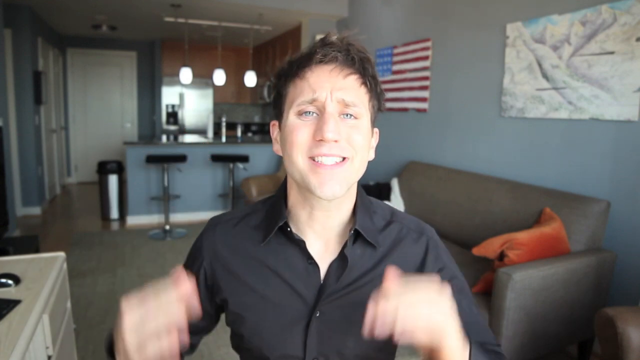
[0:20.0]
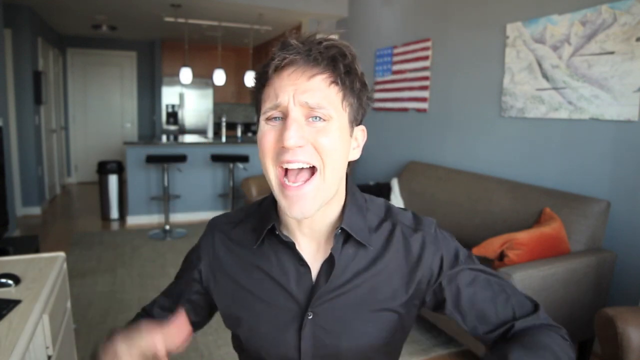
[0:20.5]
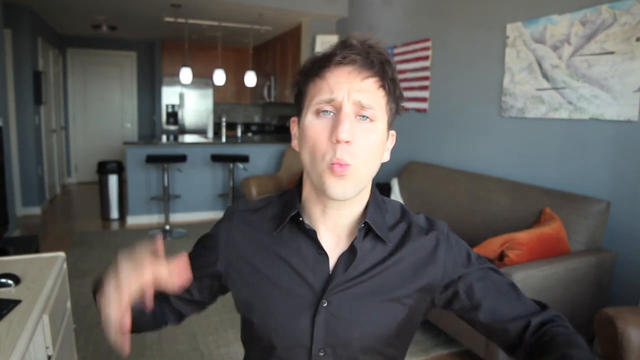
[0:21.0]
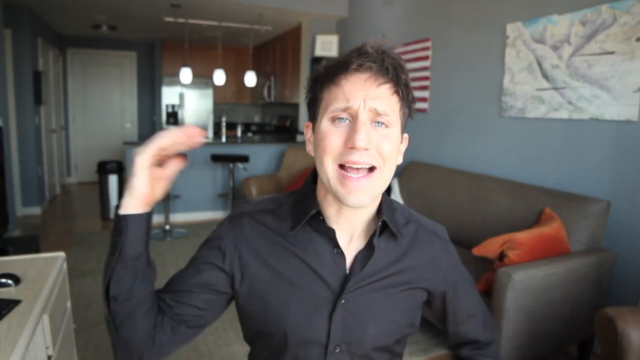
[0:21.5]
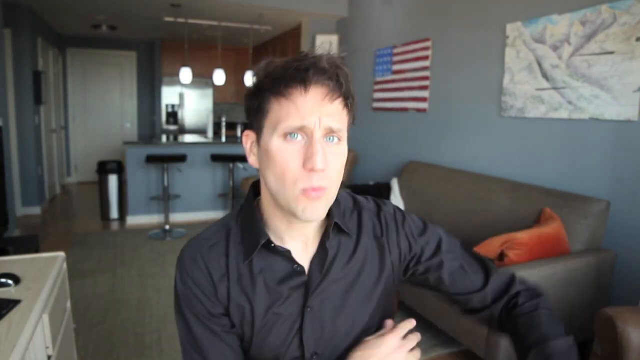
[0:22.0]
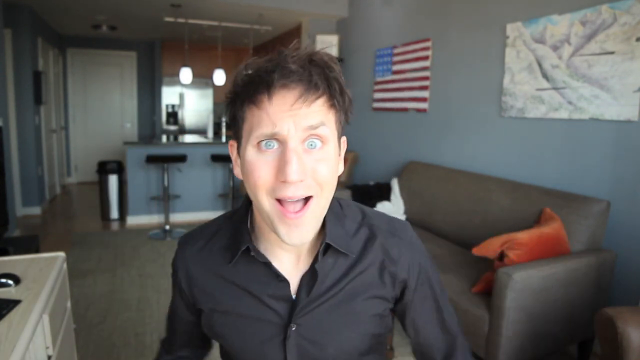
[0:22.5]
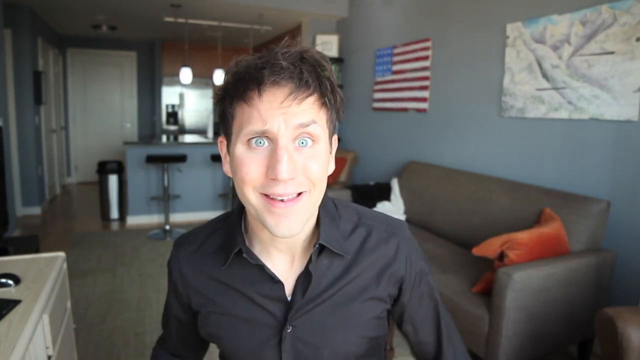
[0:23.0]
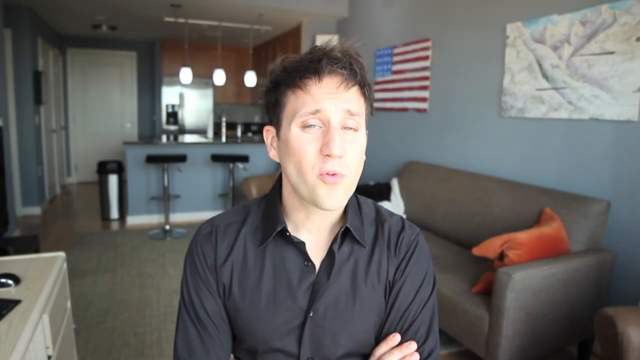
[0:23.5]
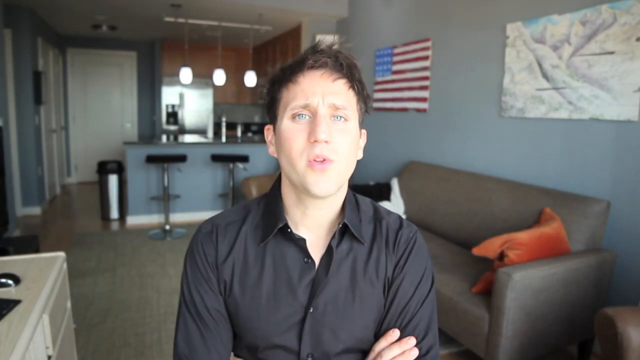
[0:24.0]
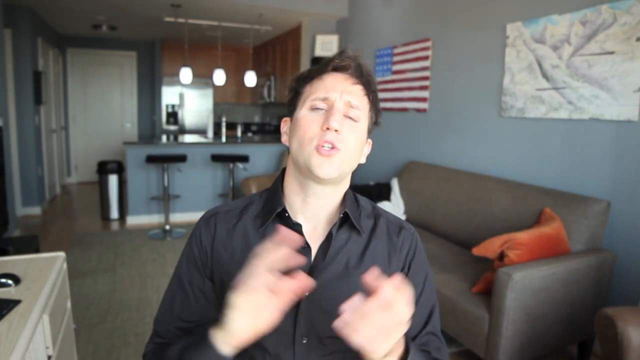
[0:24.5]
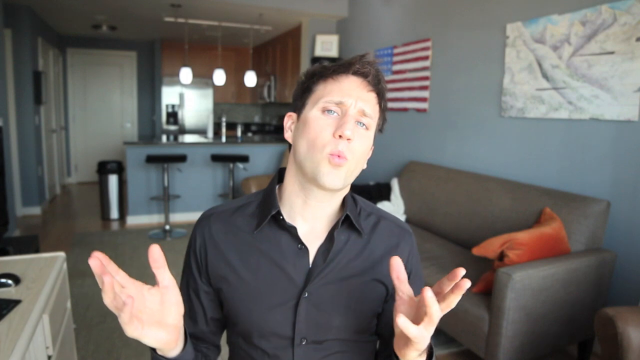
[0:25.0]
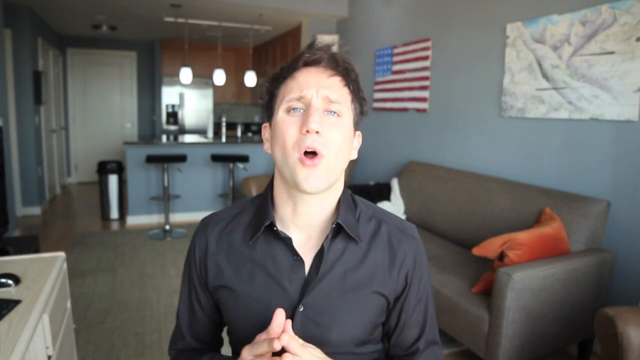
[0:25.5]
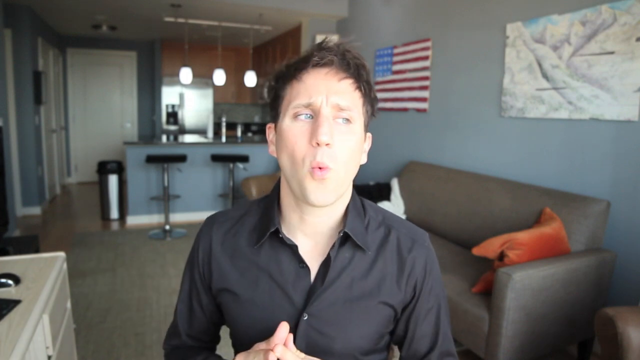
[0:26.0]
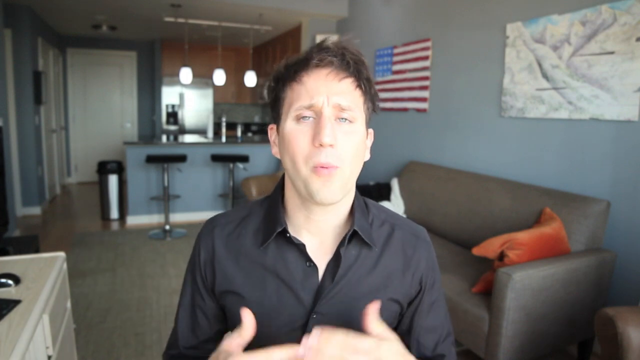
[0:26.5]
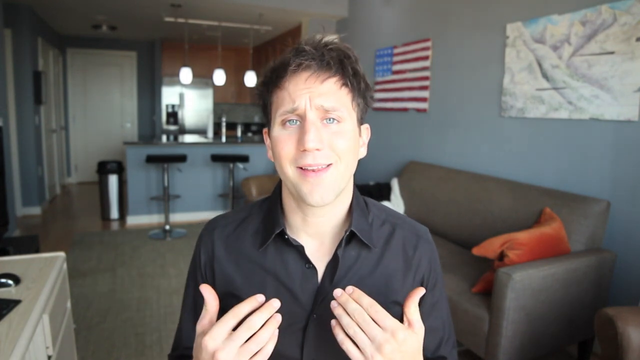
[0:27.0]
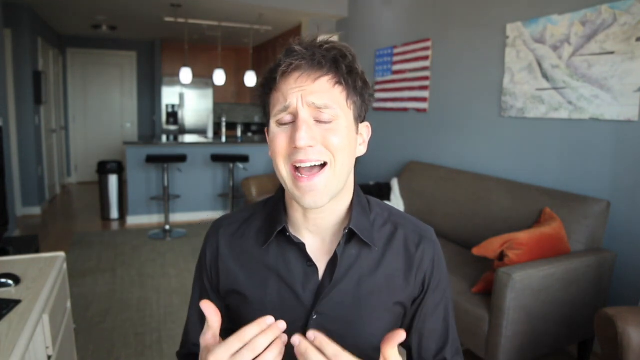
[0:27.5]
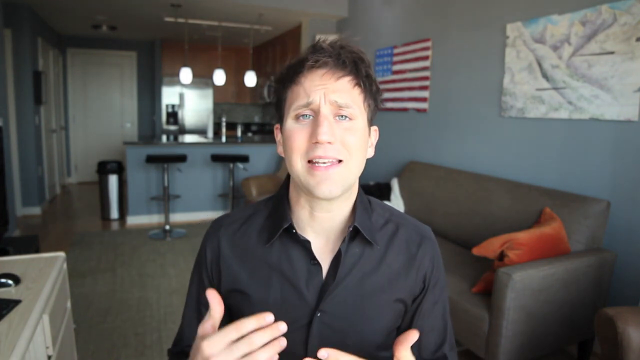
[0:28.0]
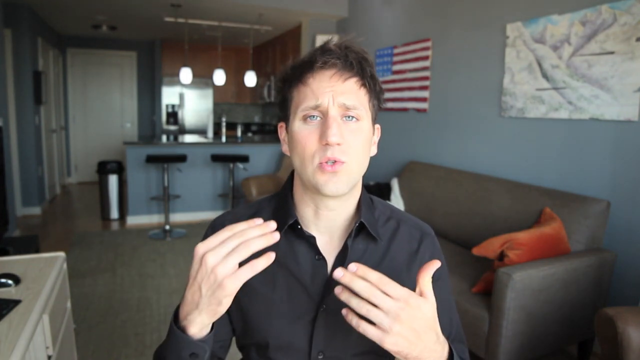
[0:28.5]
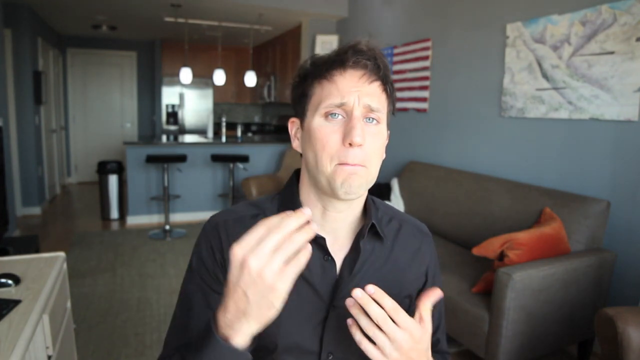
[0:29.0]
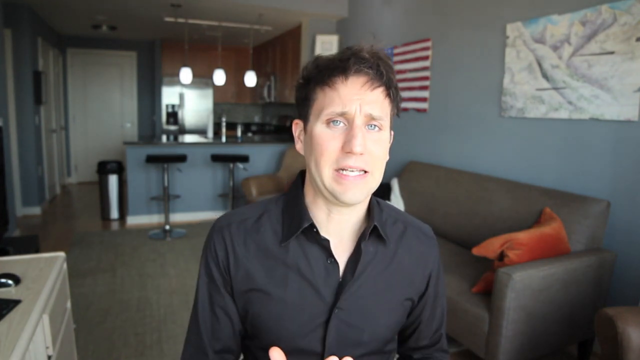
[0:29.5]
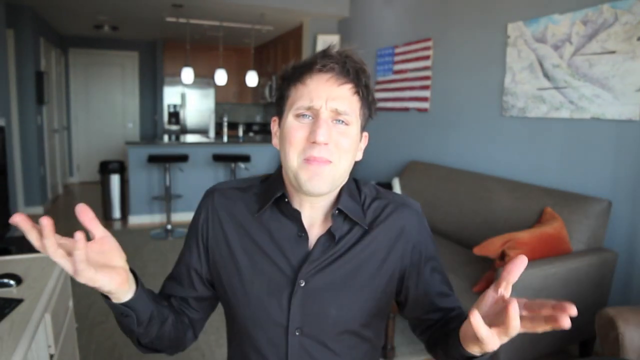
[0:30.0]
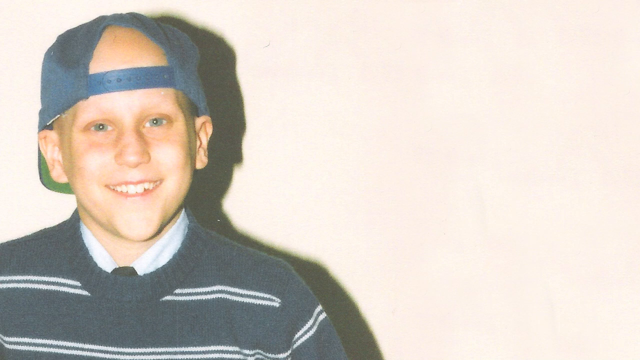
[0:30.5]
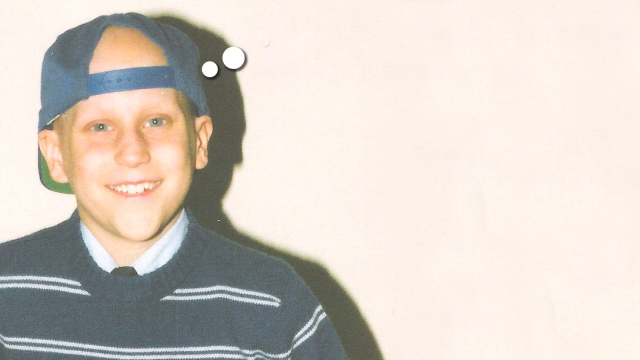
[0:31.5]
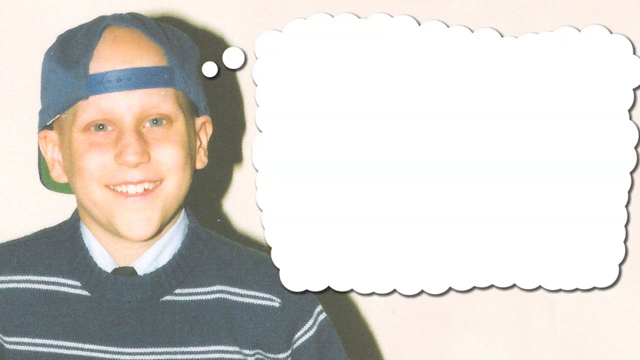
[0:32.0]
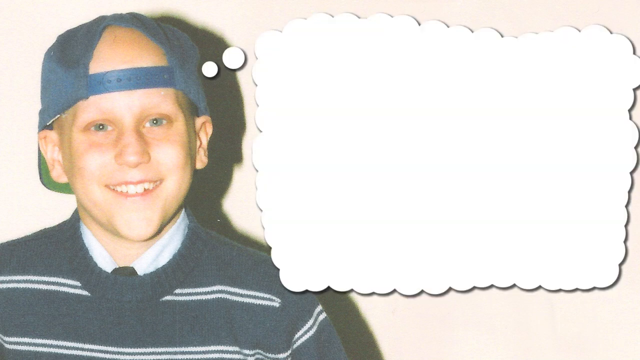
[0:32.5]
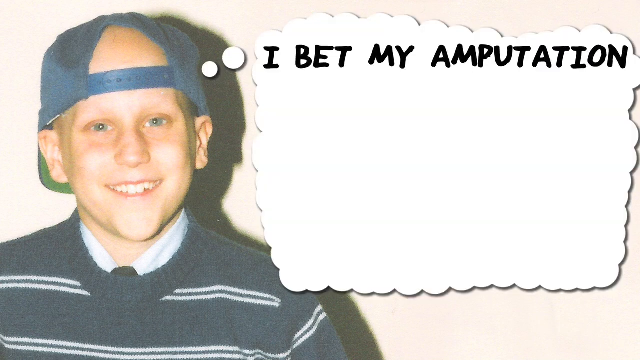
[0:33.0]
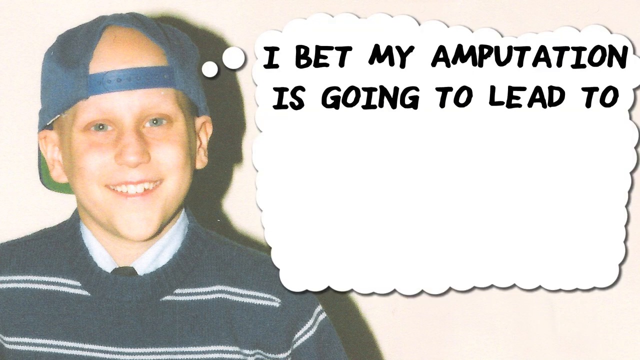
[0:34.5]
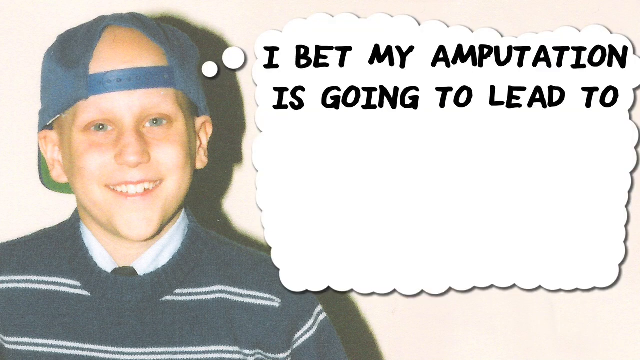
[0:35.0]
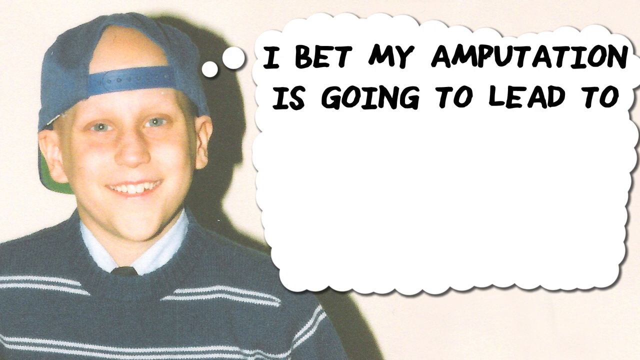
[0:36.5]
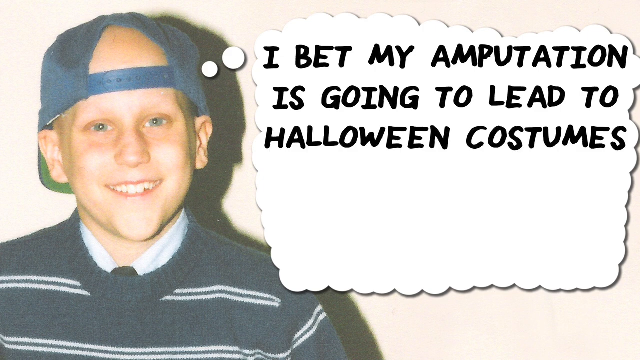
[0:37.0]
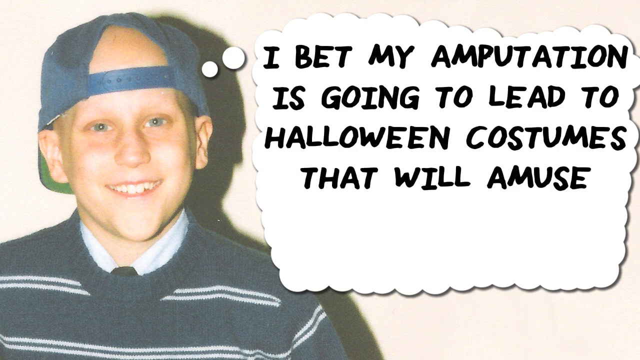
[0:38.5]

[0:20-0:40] A man, possibly in his 20s, in a black button-up shirt looks directly at the camera and gestures with his hands. He has an expressive face and often smiles as he gestures. In the background are a couch and, behind him, the kitchen counter with bar stools, a painting that looks like an American flag, and another painting that looks like a mountain range. The room is fairly well lit, with lights hanging above the kitchen counter. The scene shifts to a younger boy, very likely the same man at a younger age, wearing a blue baseball cap backwards and a striped sweater and smiling at the camera. To his right, on the right of the screen, a thought bubble in a dark black font reads "I bet my amputation is going to lead to Halloween costumes that will amuse". The scene then shifts back to the man in his 20s talking to the camera.